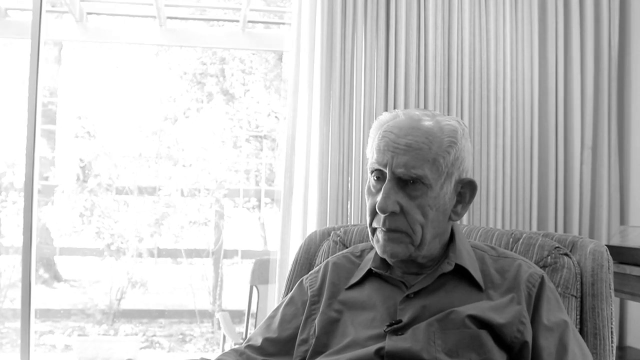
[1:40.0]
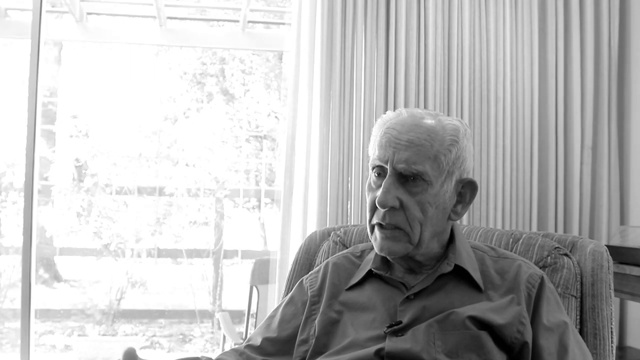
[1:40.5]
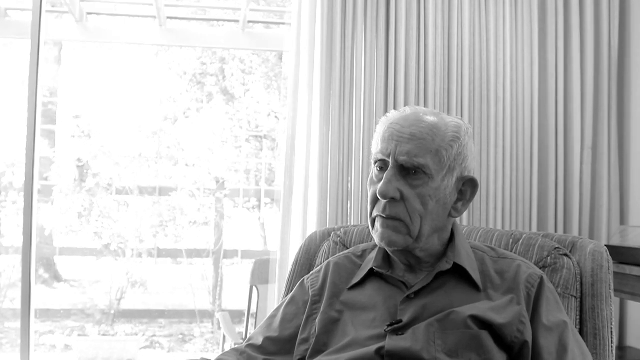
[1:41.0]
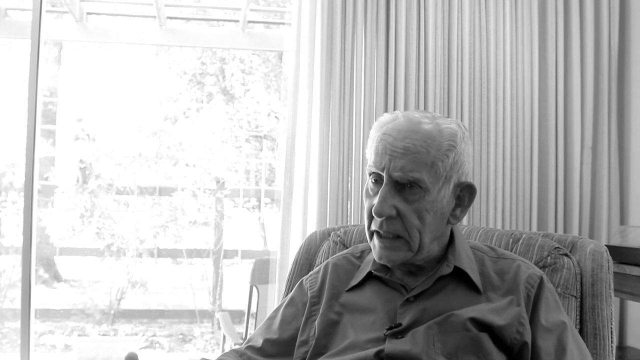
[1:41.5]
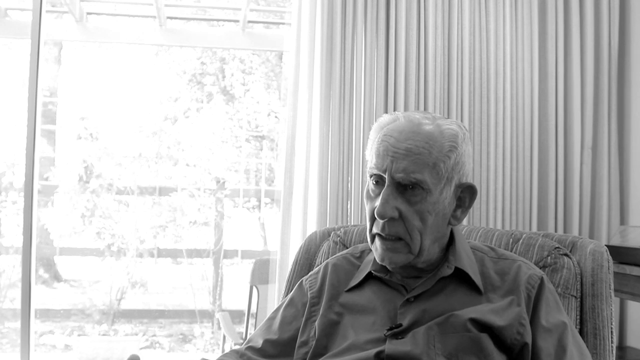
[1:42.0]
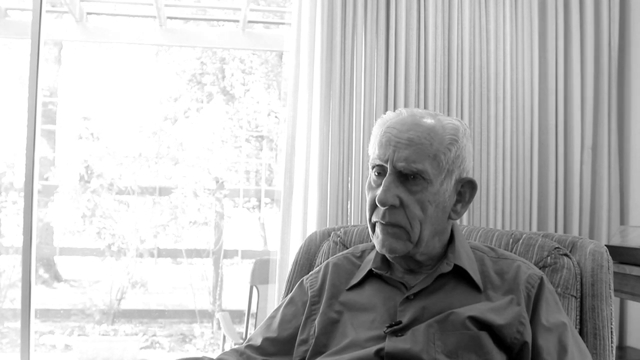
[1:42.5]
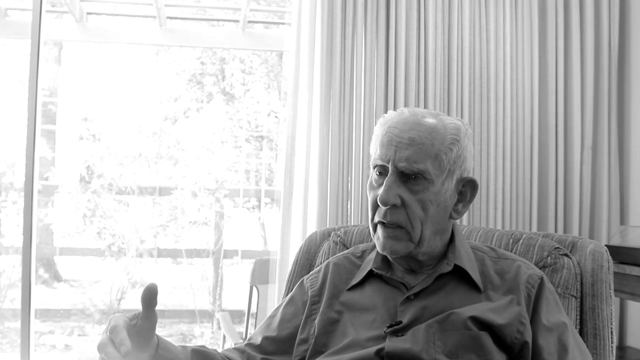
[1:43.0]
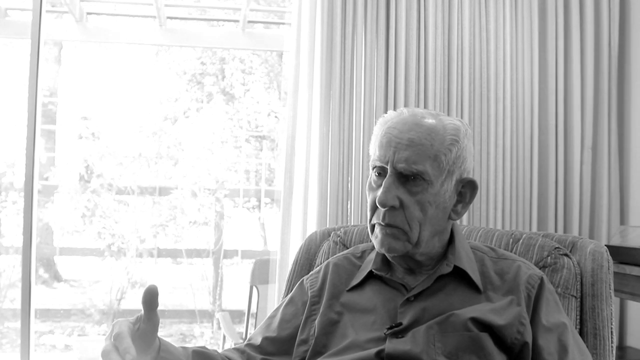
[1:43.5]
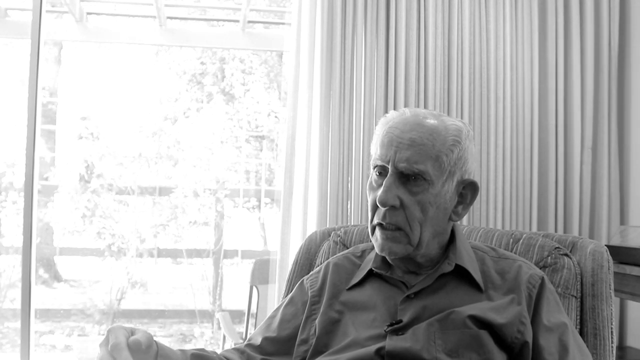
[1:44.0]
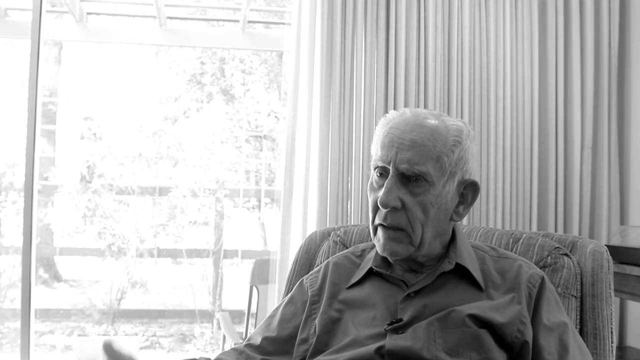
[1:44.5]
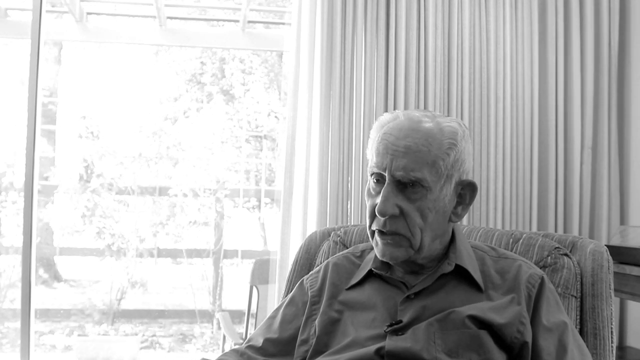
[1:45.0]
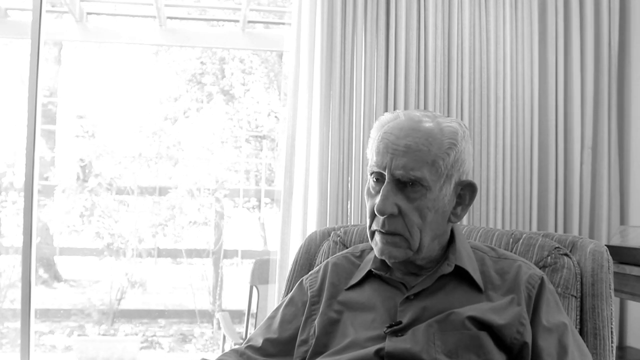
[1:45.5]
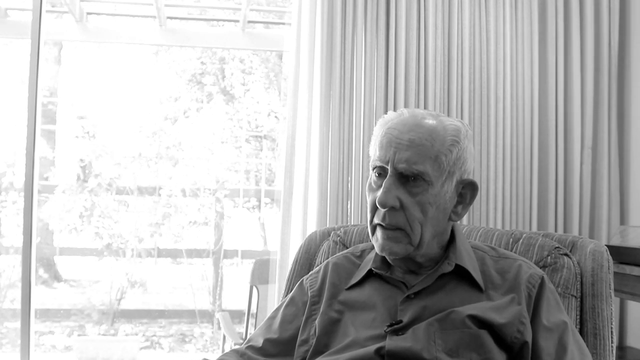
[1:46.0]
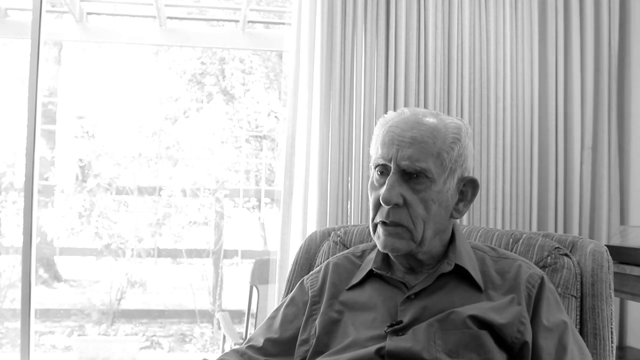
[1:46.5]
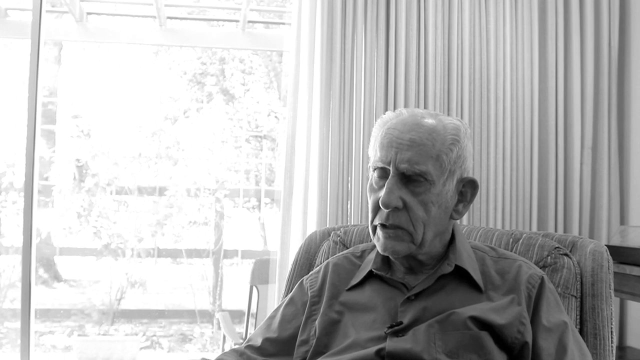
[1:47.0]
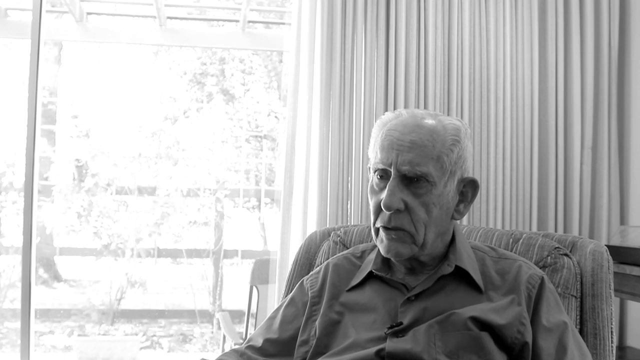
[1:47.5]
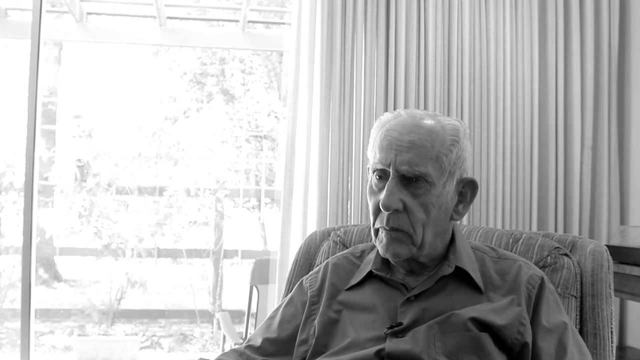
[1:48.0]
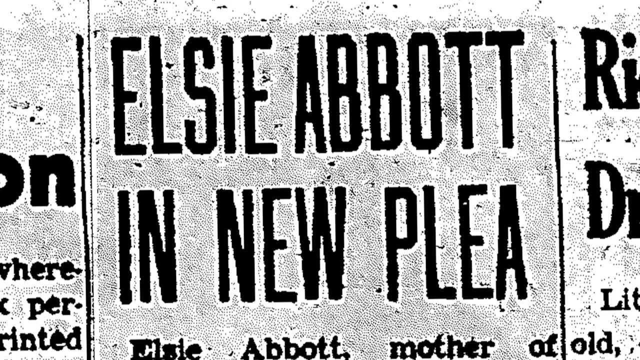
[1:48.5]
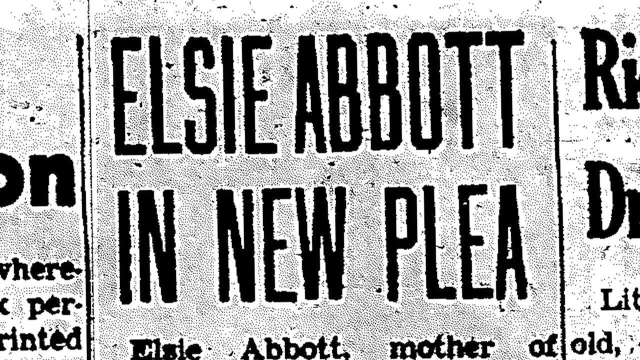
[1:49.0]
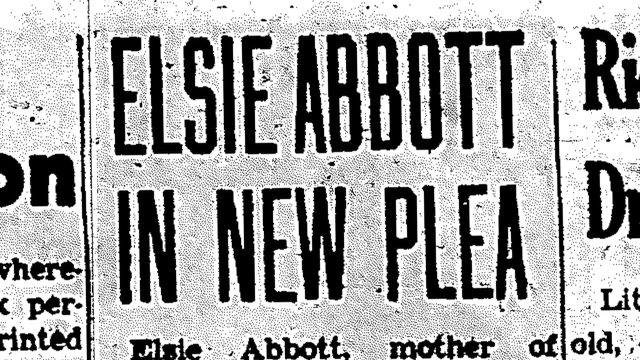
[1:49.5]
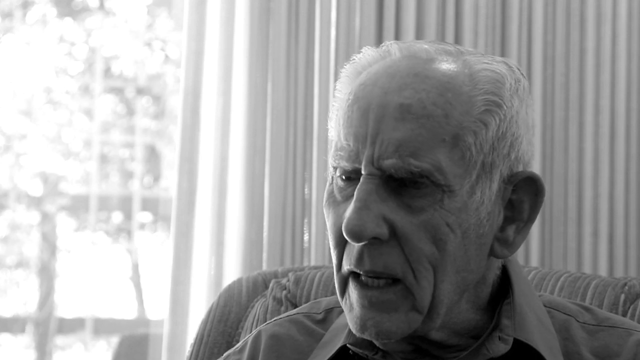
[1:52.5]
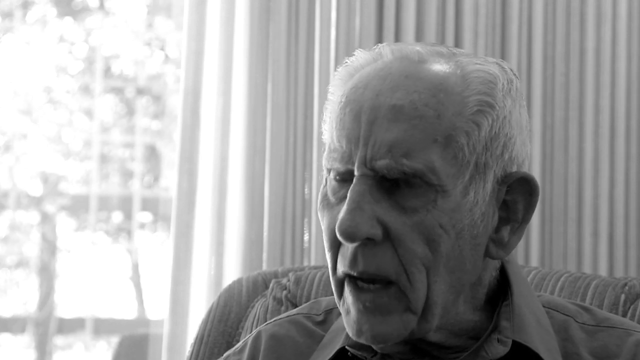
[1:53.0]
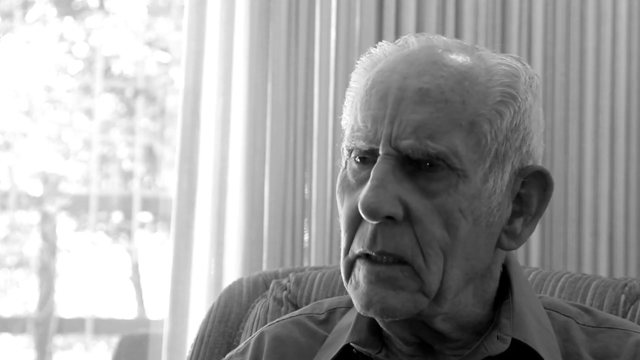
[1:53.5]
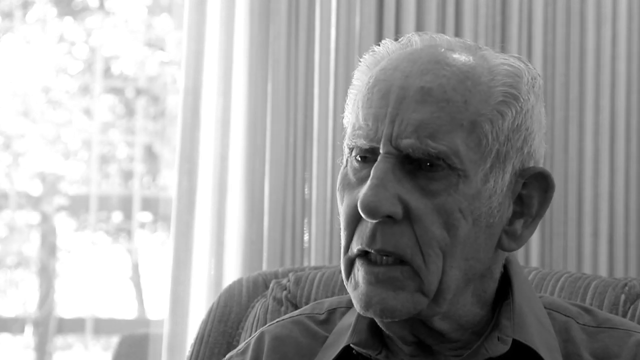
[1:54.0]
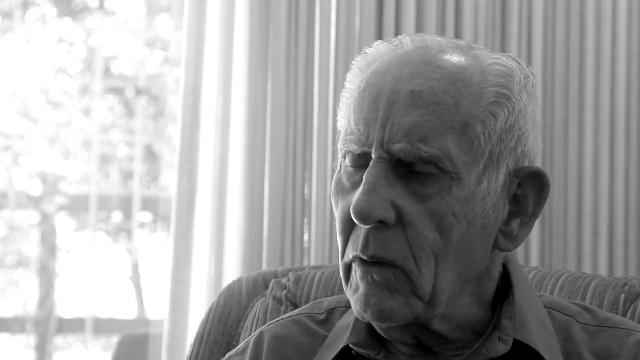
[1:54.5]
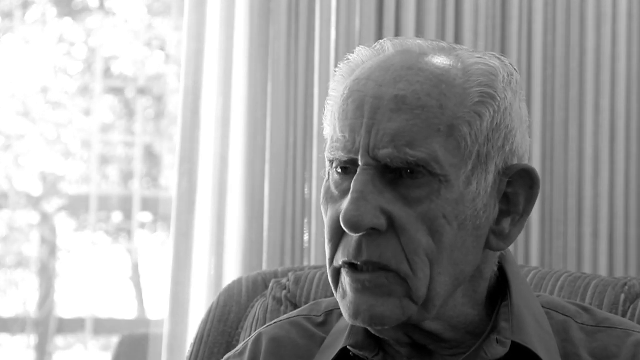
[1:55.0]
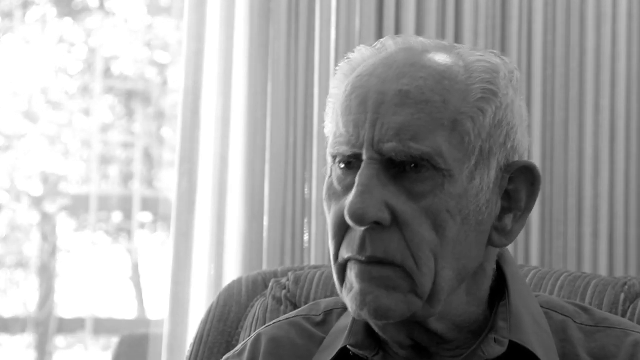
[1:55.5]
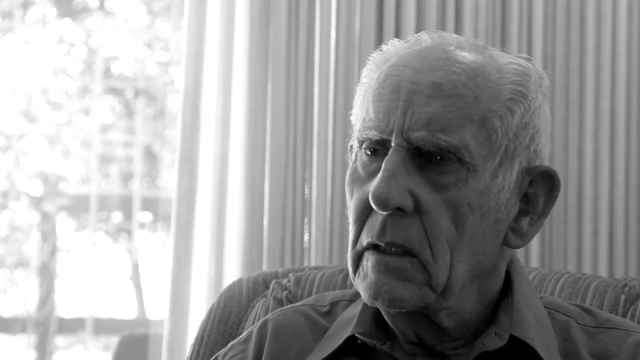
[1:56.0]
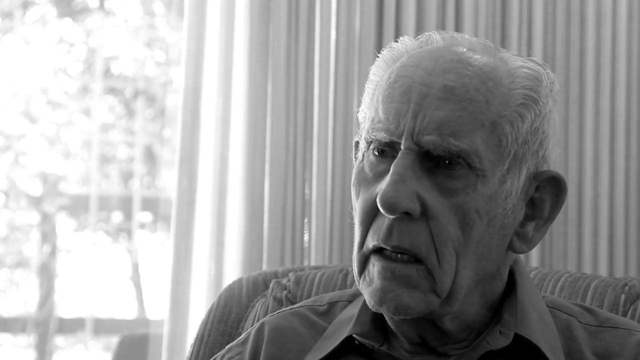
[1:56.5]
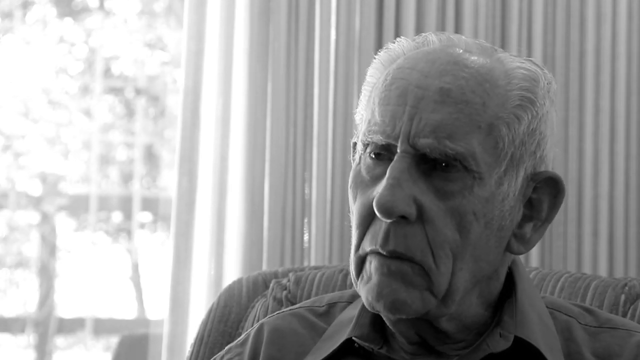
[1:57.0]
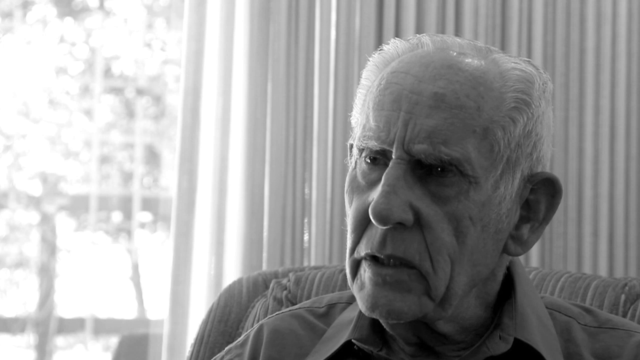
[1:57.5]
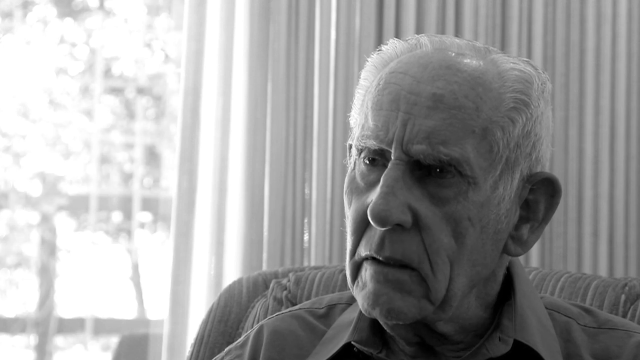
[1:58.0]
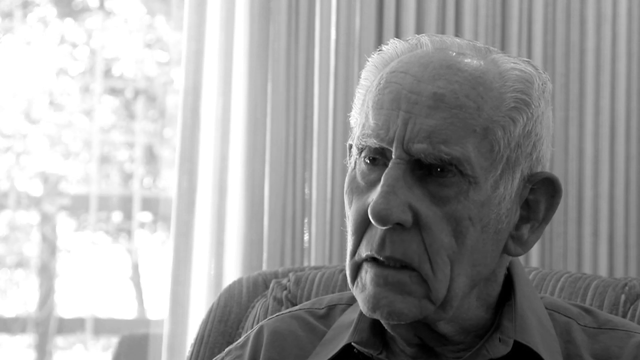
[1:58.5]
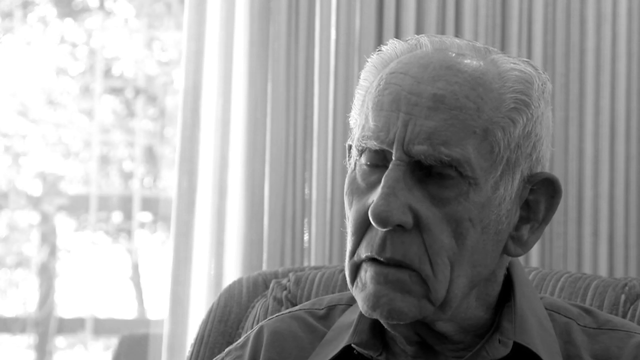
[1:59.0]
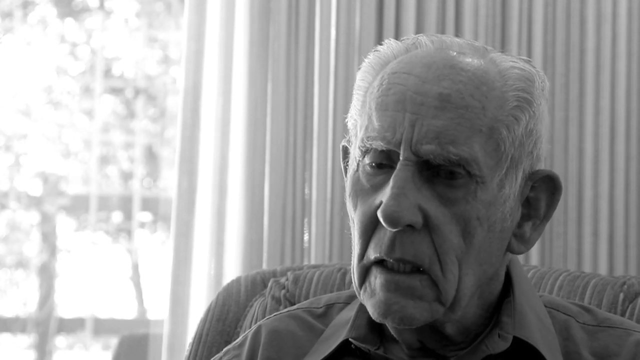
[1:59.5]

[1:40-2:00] The old man continues to talk in his living room, where it is very sunny outside. A newspaper article reads "Elsie Abbott in new plea". The old man goes on talking.